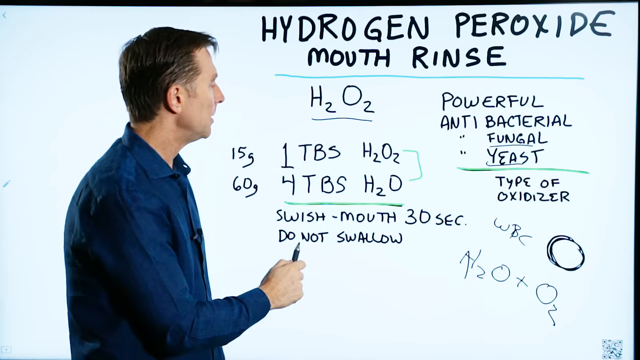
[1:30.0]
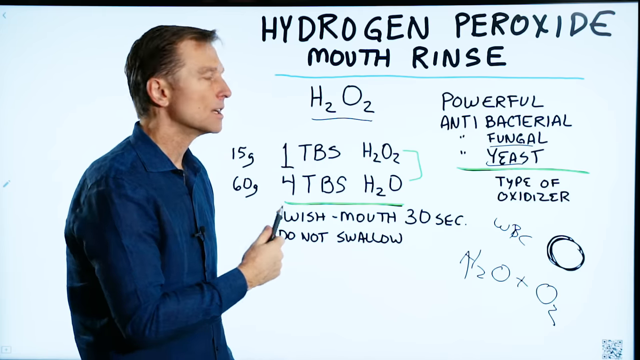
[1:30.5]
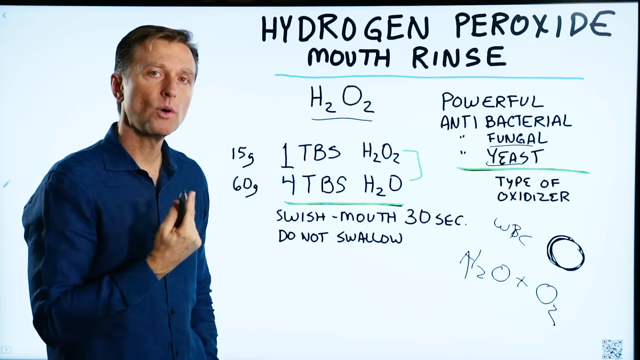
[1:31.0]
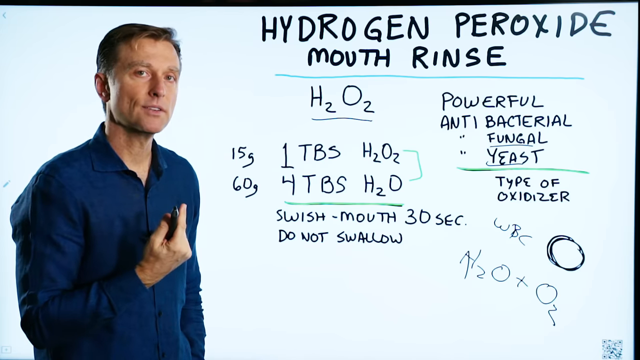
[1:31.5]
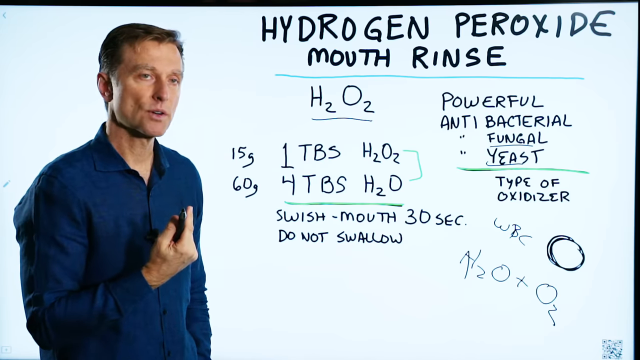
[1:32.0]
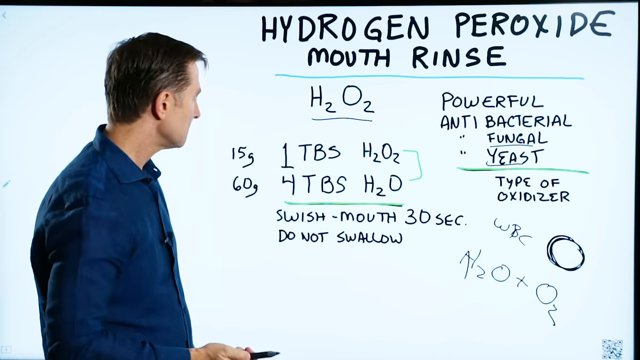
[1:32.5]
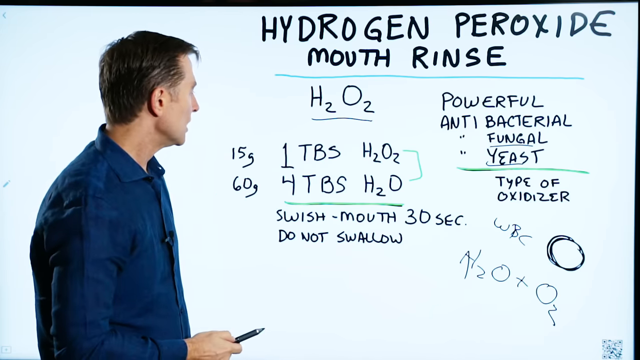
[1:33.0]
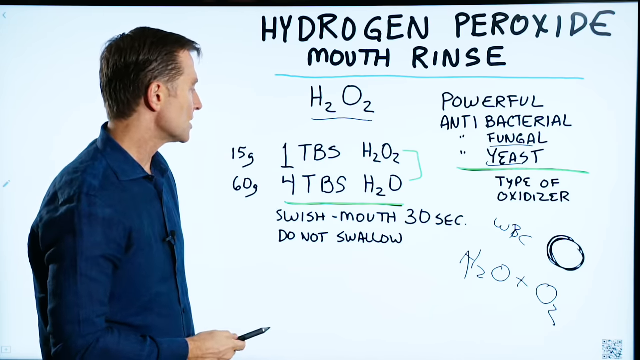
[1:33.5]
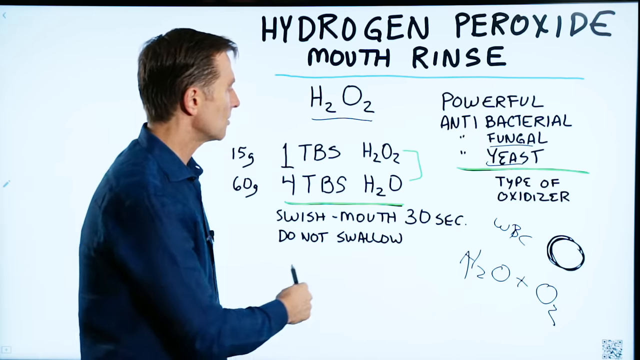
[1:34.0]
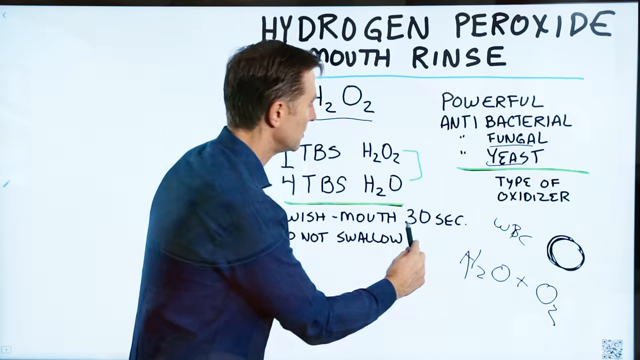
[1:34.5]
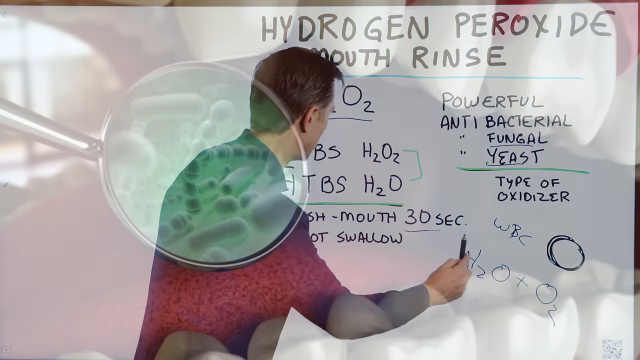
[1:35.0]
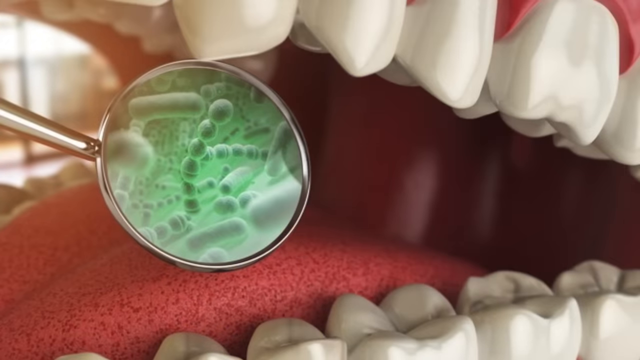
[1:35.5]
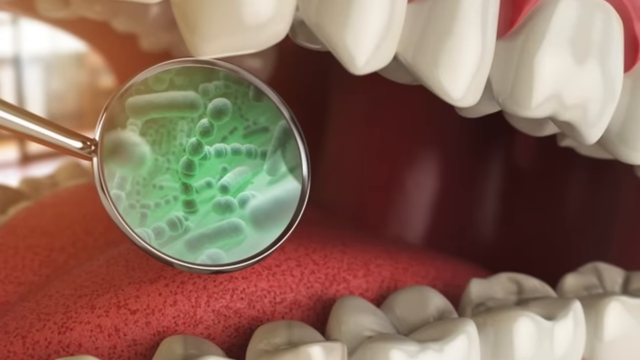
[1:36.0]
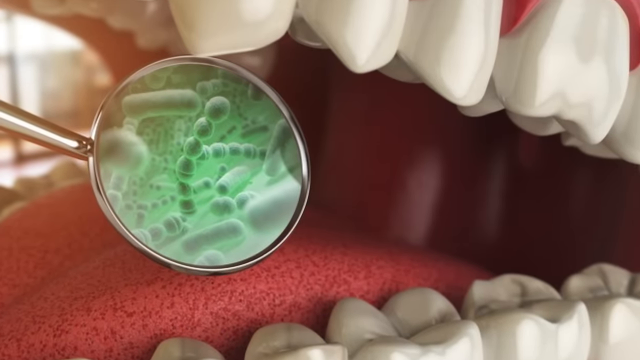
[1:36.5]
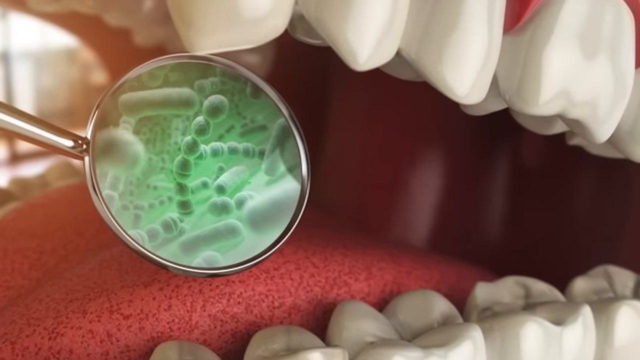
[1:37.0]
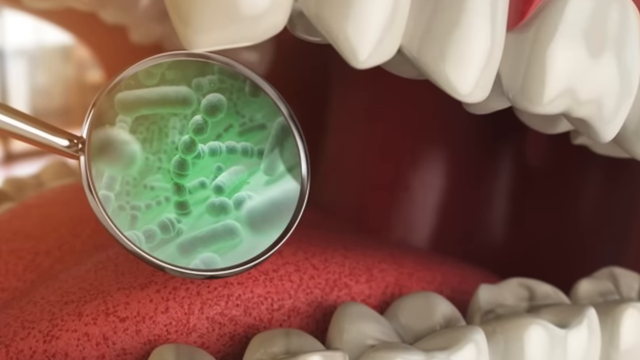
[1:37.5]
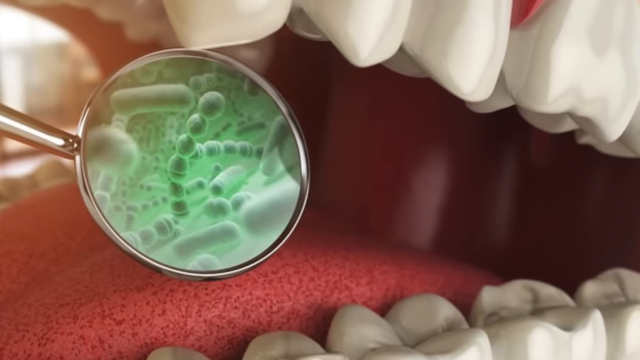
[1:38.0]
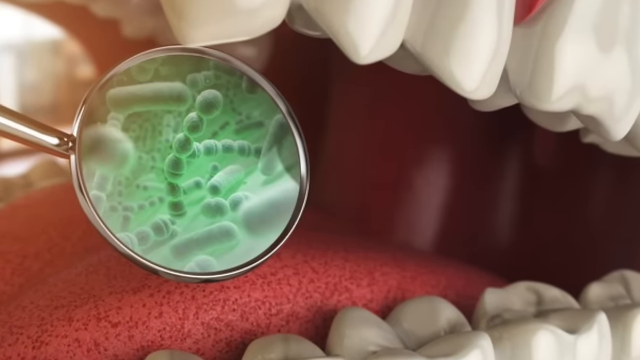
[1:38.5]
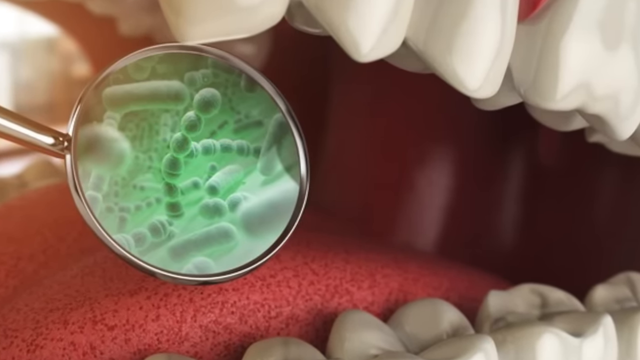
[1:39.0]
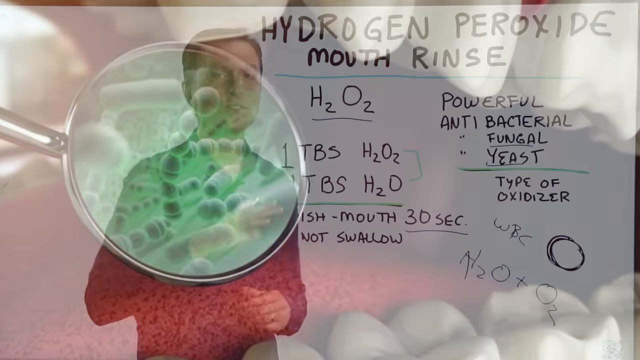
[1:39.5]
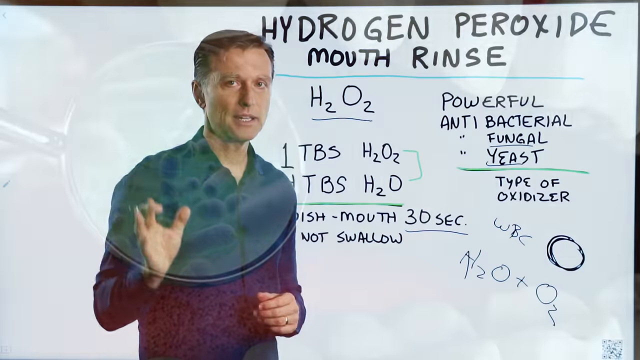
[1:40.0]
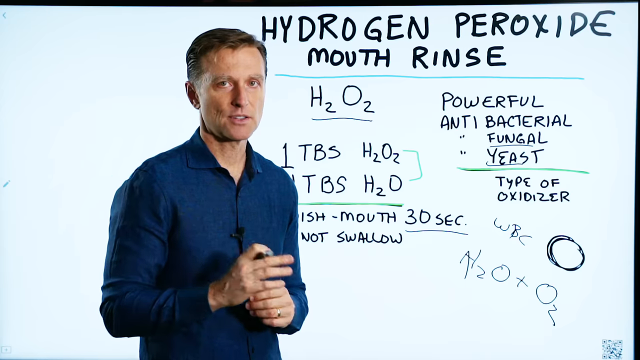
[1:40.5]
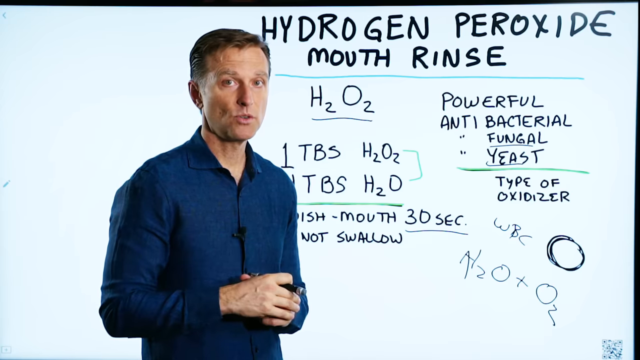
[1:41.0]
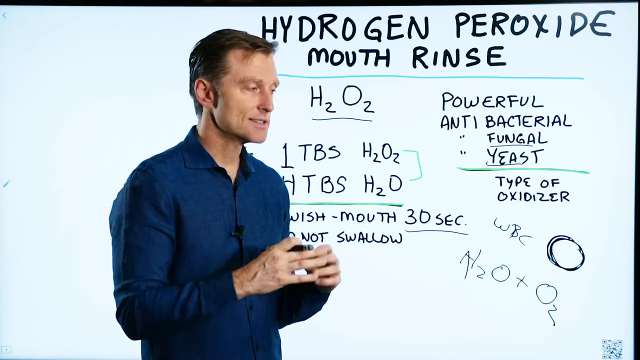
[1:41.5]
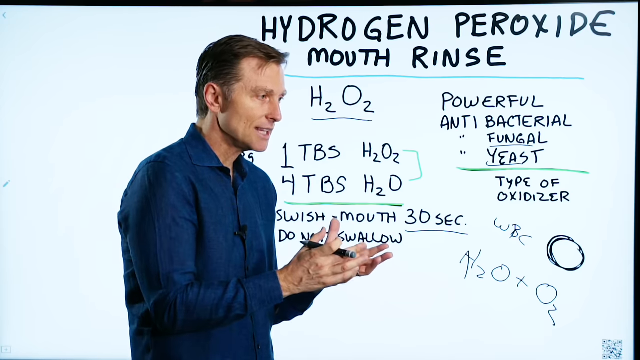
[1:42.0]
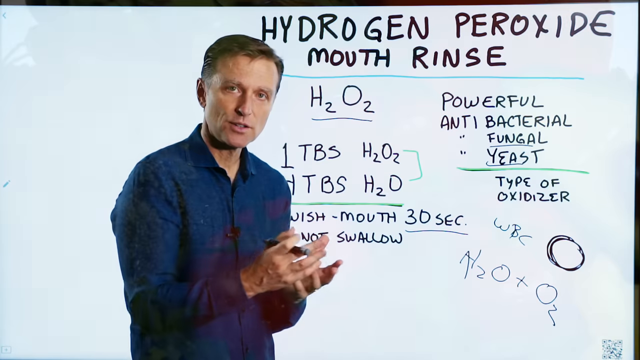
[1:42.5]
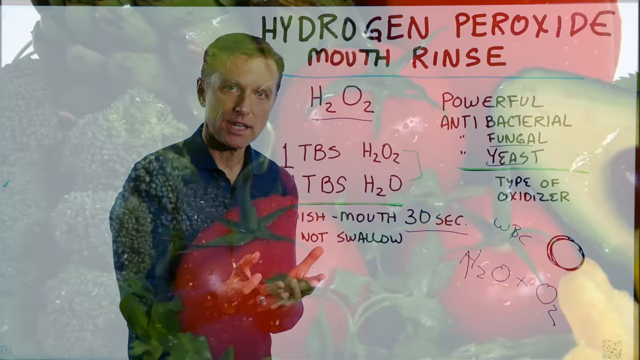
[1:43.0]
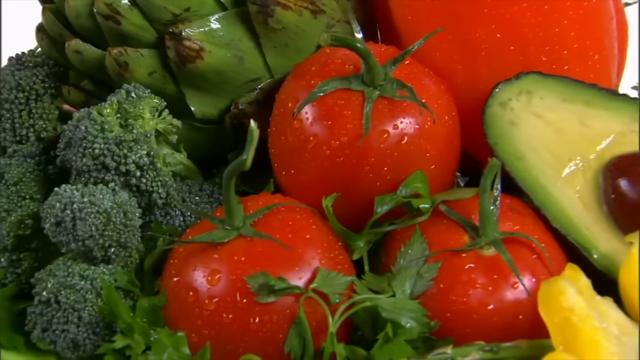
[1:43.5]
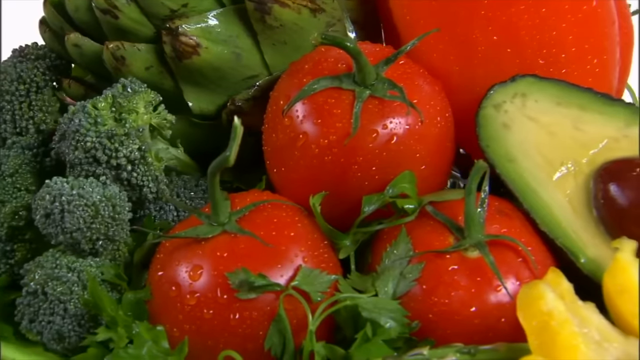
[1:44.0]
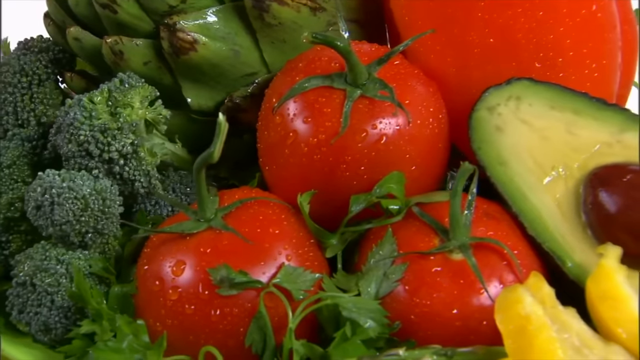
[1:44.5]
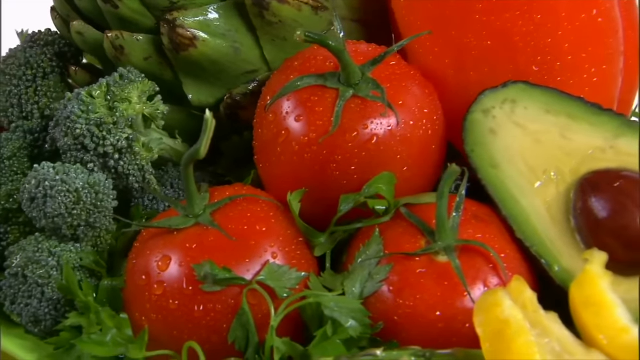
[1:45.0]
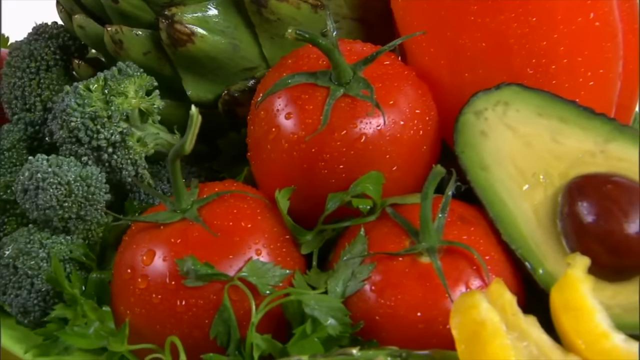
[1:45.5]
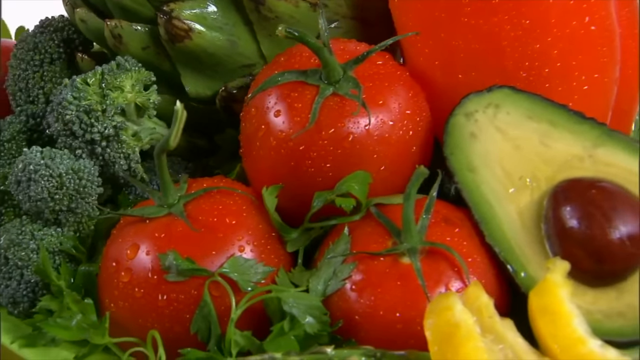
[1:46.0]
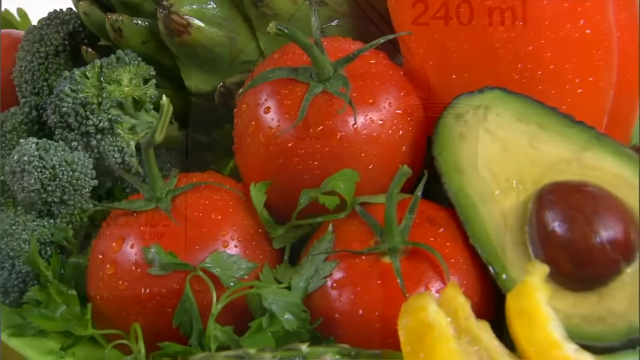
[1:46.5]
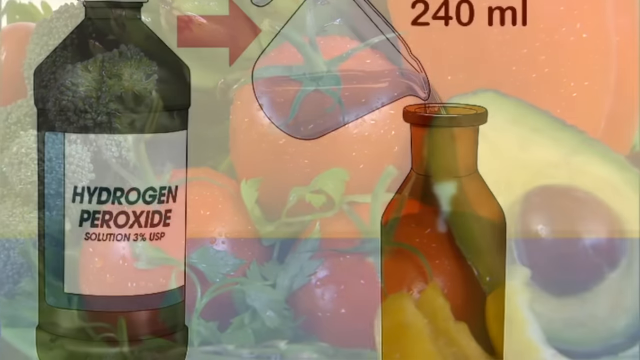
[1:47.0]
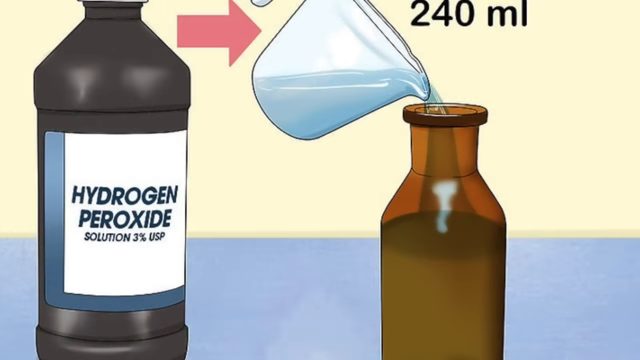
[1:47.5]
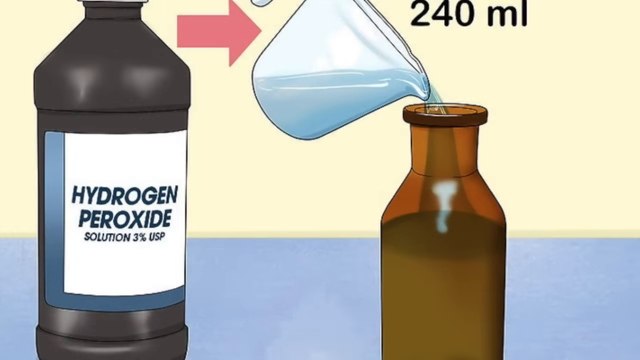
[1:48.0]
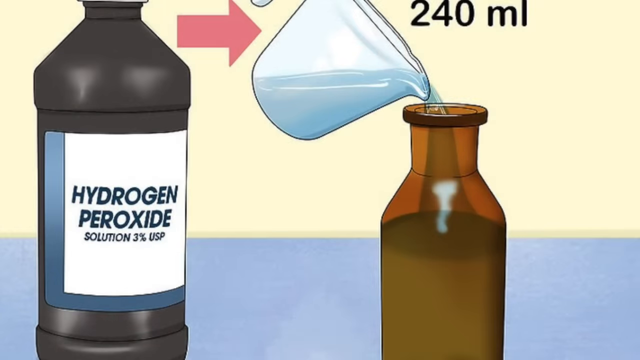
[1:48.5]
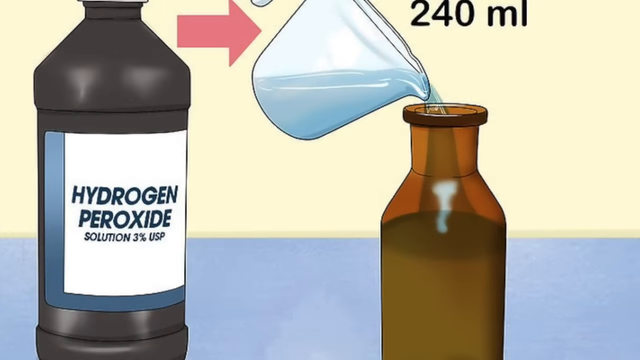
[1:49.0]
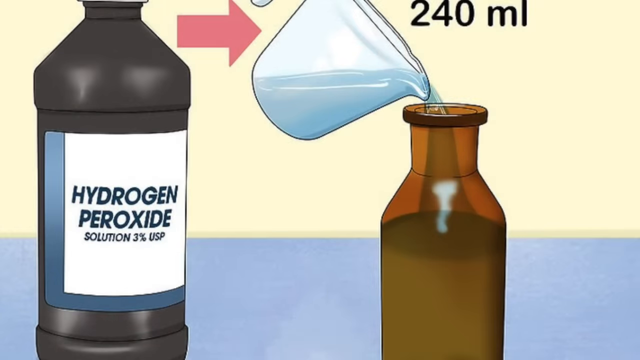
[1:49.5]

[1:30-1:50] The man is still using his hand to indicate. A drawing or picture shows white teeth with something glass-like checking the bacteria inside the teeth, and a red tongue is visible. The man appears again, gesturing with his hand. The background shifts to show tomatoes, broccoli, and avocado. It changes again to a hydrogen peroxide bottle, with a sign showing a jug pouring 240ml of hydrogen peroxide solution into a round bottle.